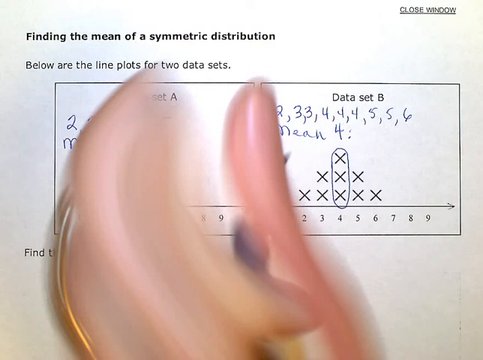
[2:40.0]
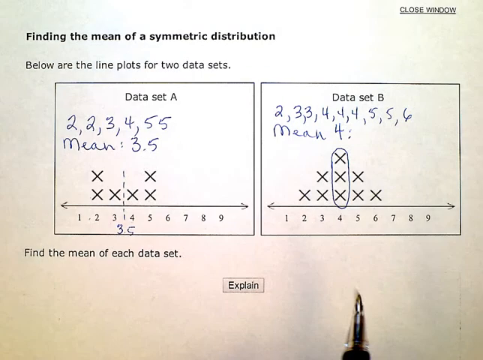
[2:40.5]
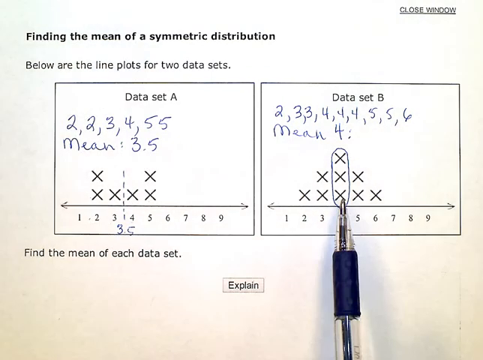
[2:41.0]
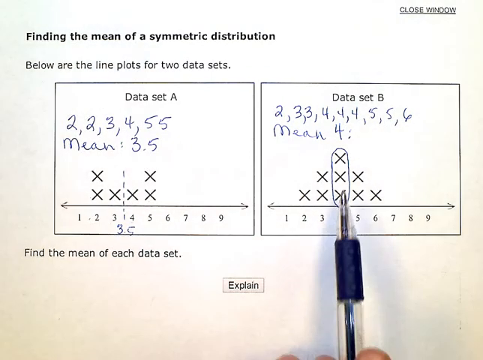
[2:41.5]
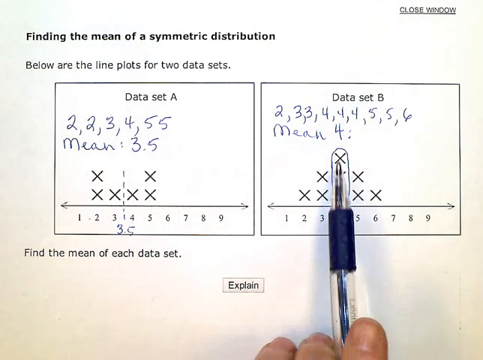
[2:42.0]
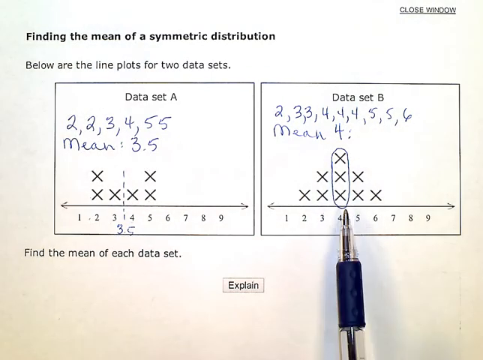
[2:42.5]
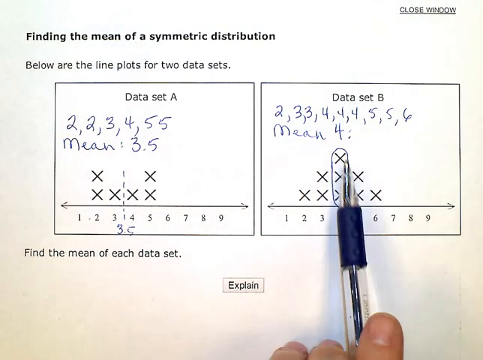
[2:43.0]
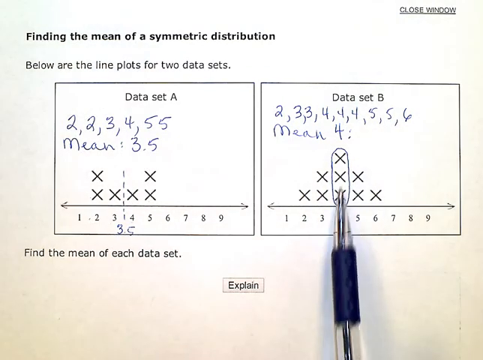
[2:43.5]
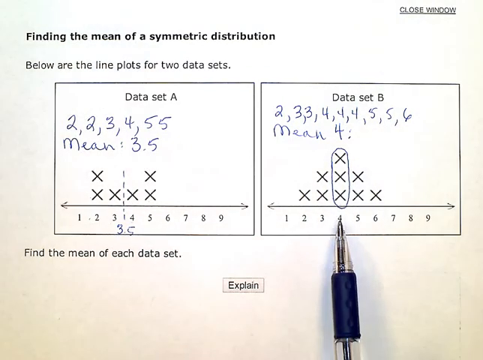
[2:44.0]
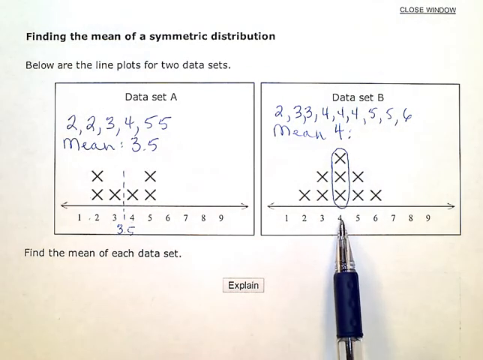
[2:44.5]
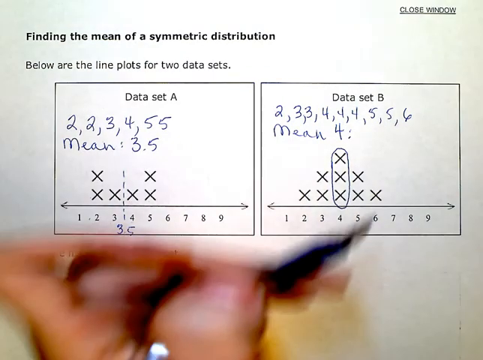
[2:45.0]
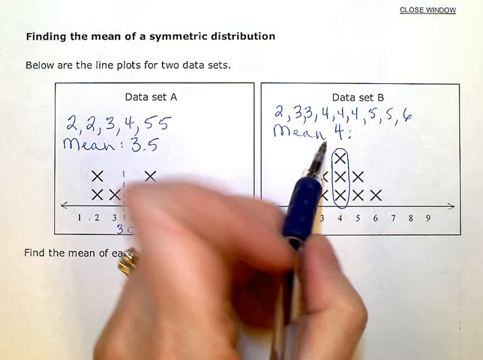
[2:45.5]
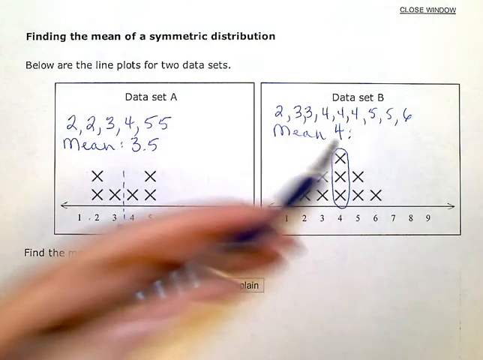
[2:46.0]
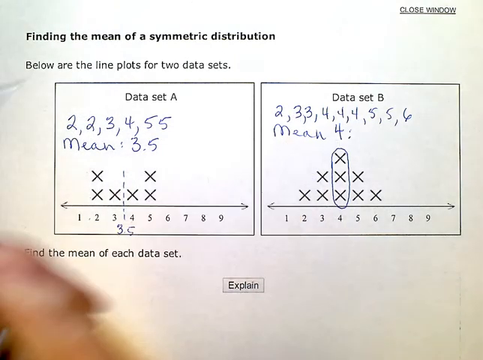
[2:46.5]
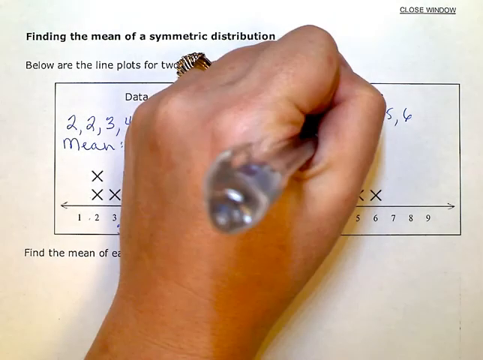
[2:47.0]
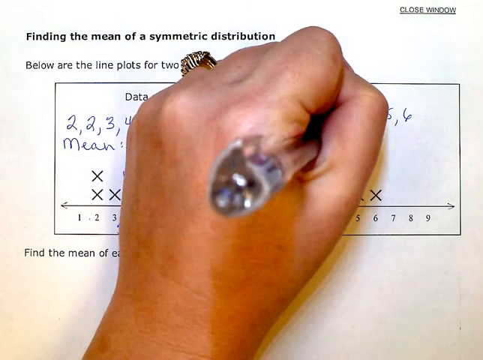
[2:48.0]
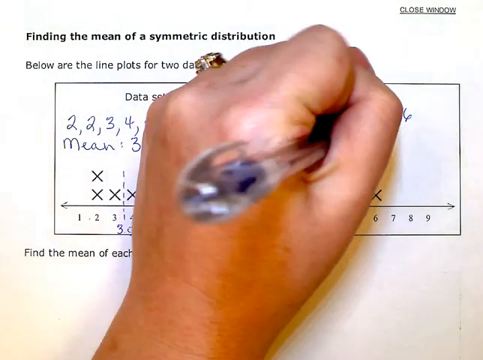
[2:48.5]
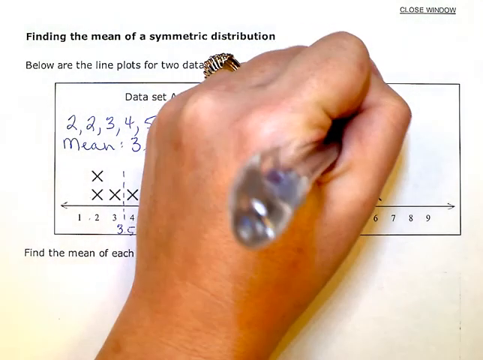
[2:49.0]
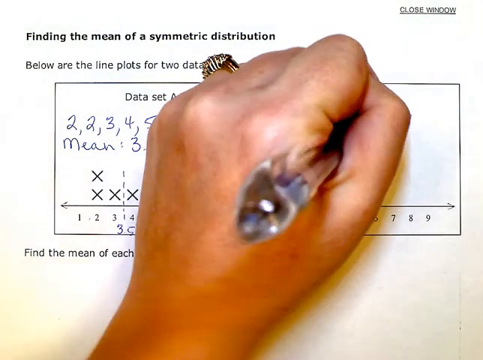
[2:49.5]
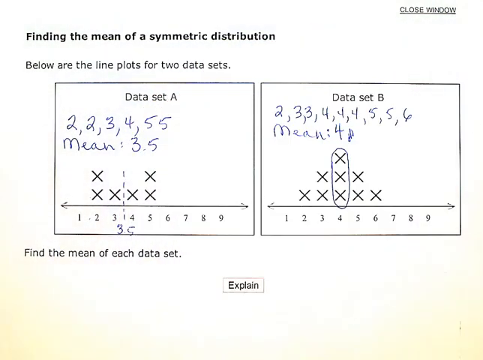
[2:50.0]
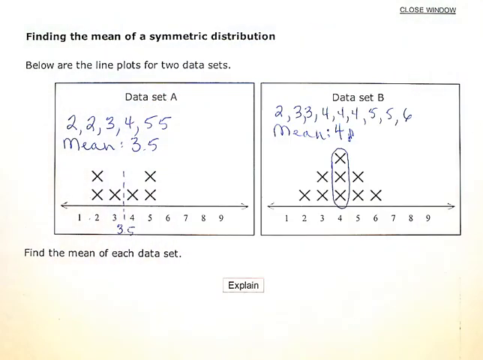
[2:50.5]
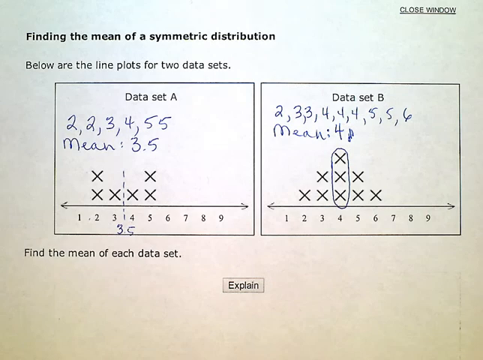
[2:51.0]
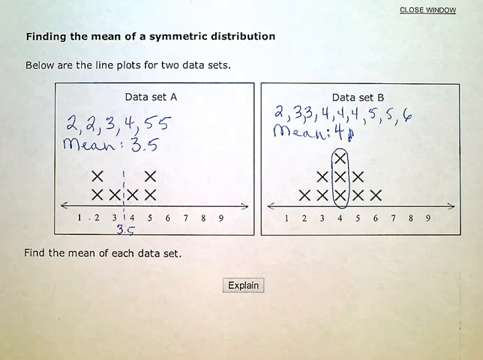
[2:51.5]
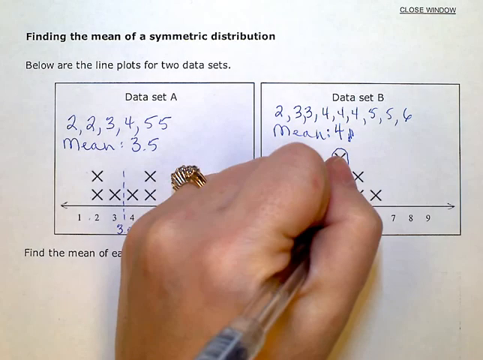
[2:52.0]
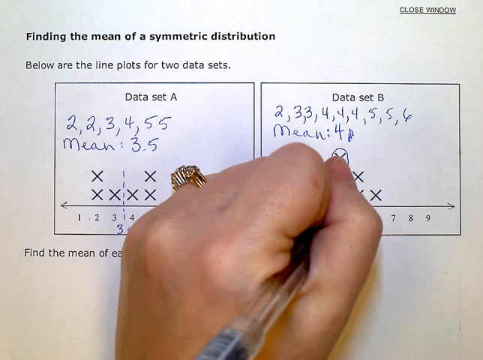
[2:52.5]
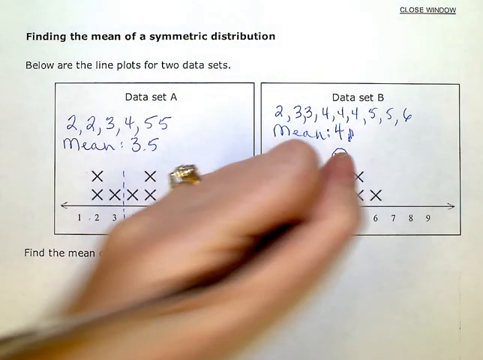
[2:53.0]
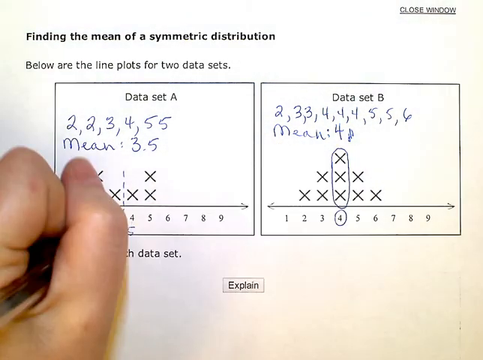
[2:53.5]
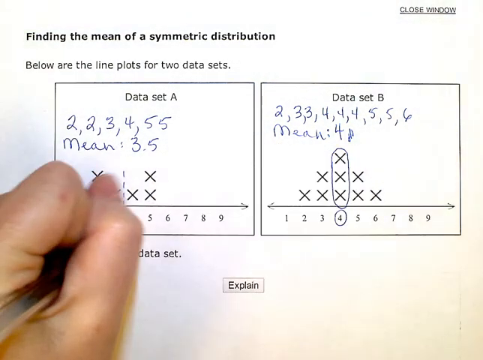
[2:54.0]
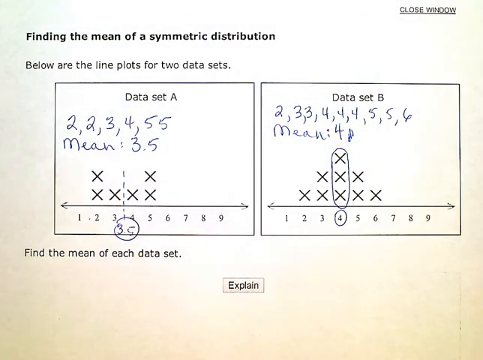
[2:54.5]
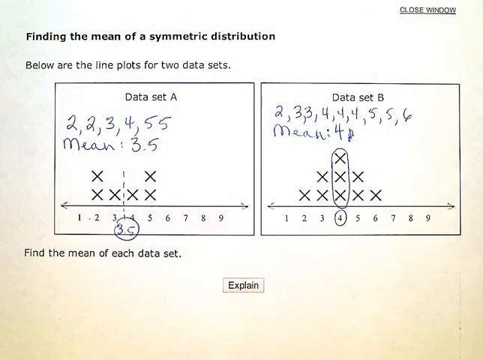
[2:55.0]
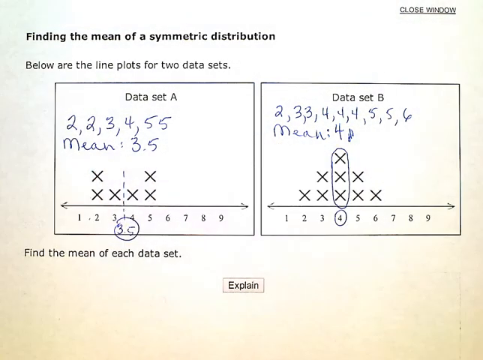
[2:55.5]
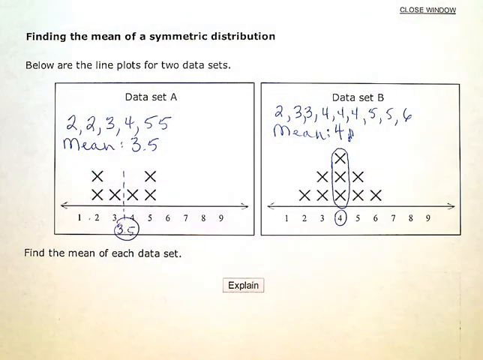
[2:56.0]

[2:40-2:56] Her left hand pulls away so fast it blurs. She holds the pen a little above the paper, and its shadow shows on the left side. Instead of a dotted line like on data set A, she circles the 4 and, it seems, does so because the mean is 4. She circles the three stacked x's, then moves the pen vertically up and down, pulls it away a little, and writes more. After the 4 there are scribble marks that are hard to make out, possibly from the pen running out. The finished writing shows 2, 3, 3, 4, 4, 4, 5, 5, 6, with "mean: 4" on a line under the first 2, followed by scribble marks, and the 4 at the bottom of the number line and the three x's above it are circled.